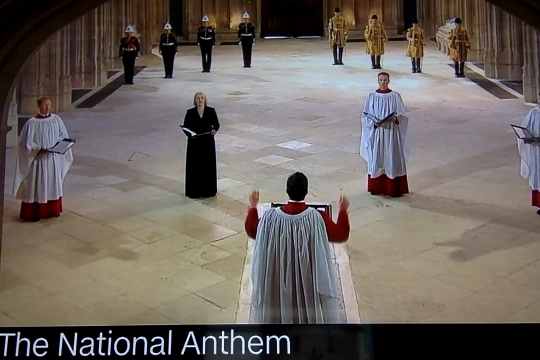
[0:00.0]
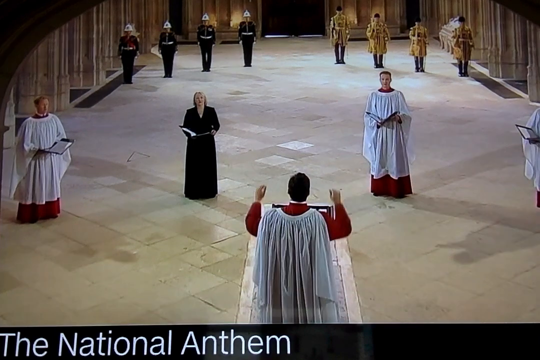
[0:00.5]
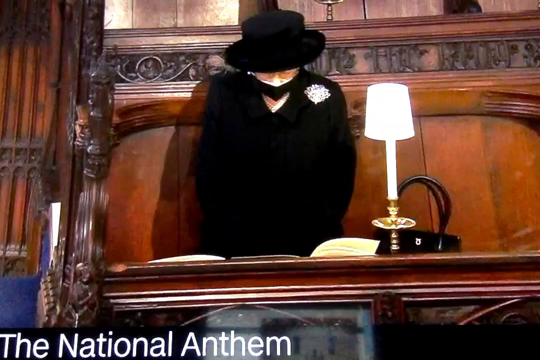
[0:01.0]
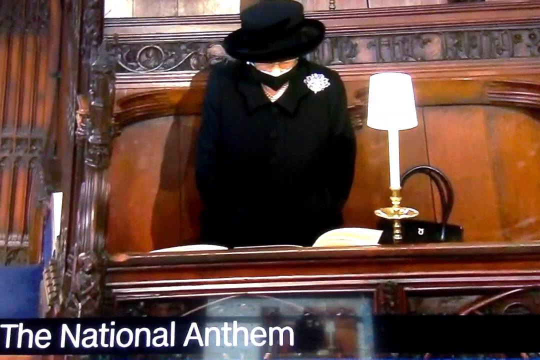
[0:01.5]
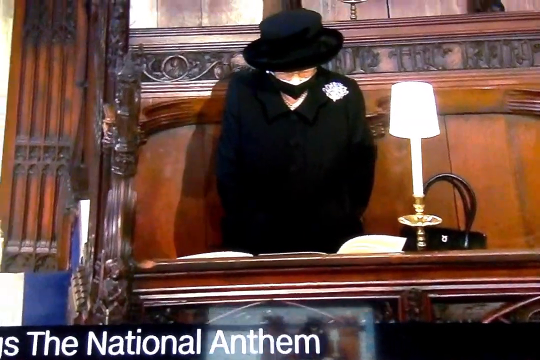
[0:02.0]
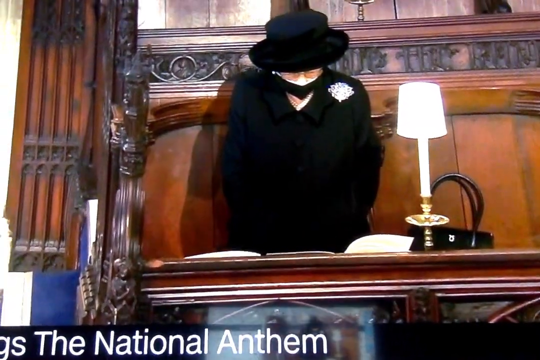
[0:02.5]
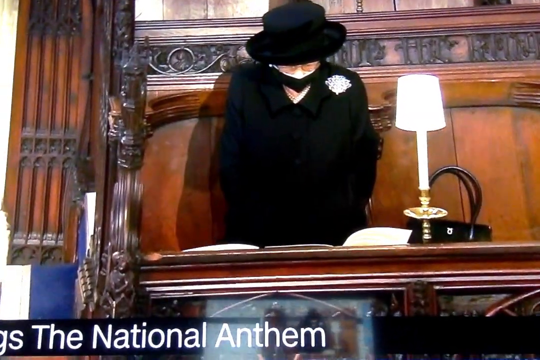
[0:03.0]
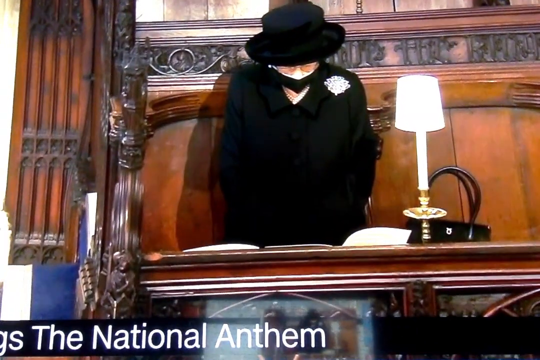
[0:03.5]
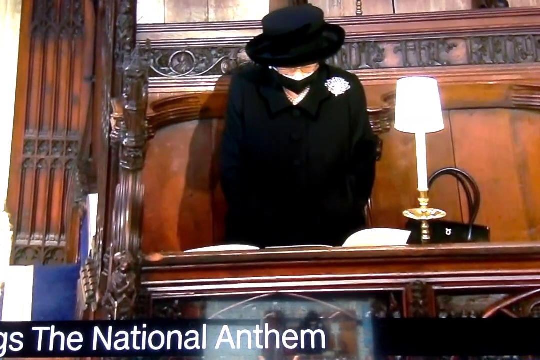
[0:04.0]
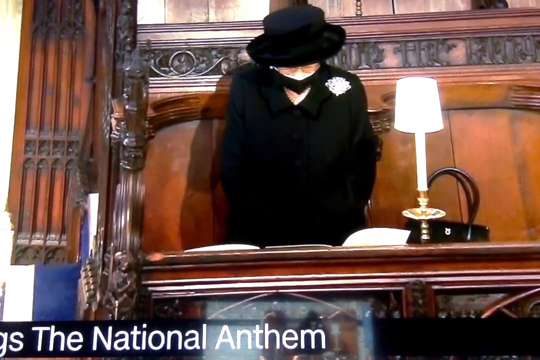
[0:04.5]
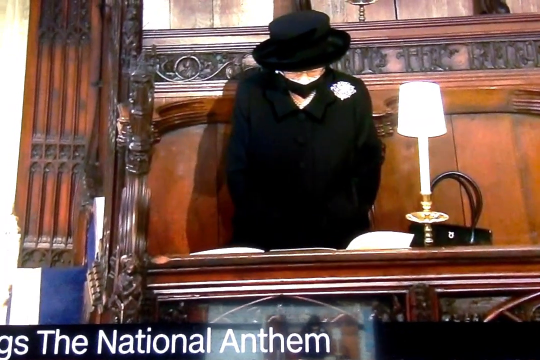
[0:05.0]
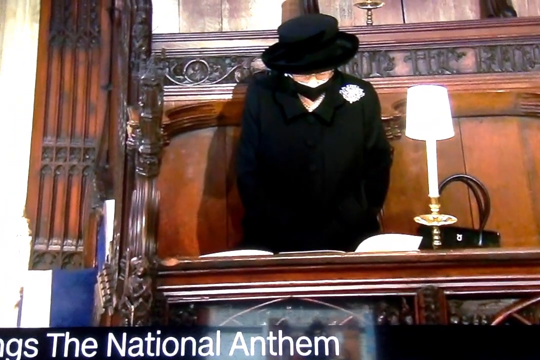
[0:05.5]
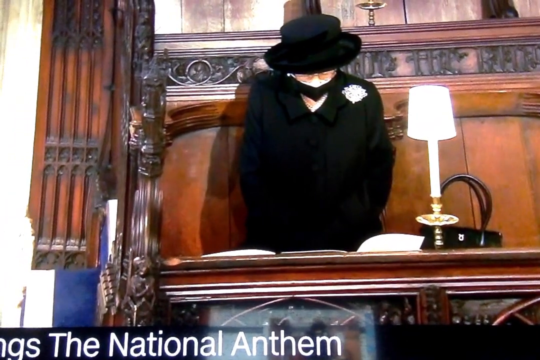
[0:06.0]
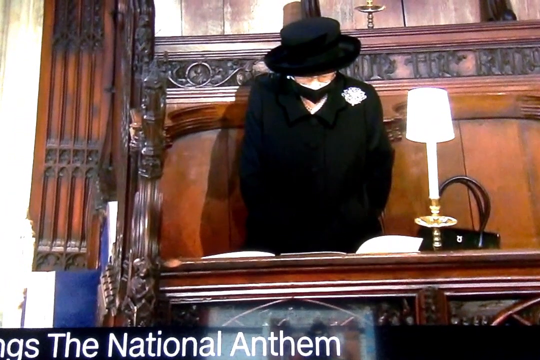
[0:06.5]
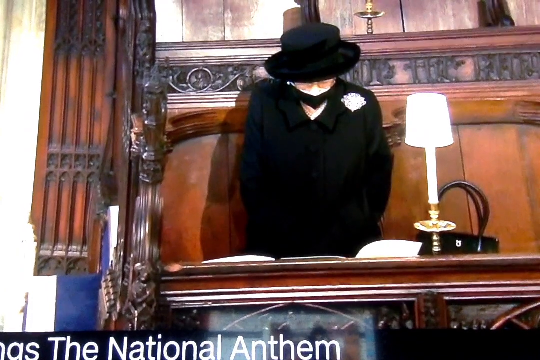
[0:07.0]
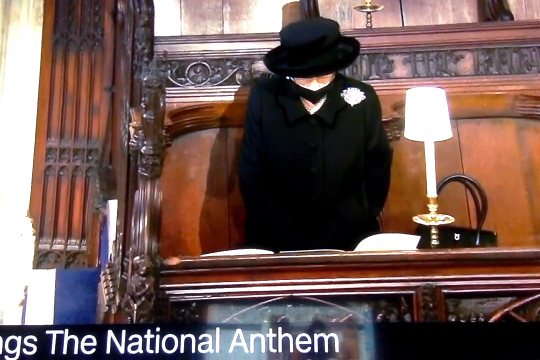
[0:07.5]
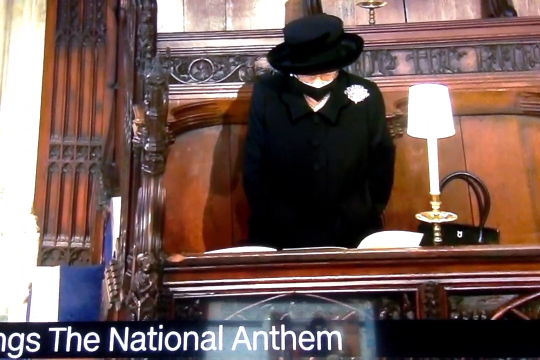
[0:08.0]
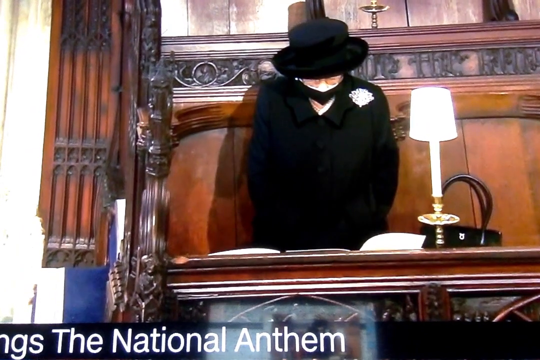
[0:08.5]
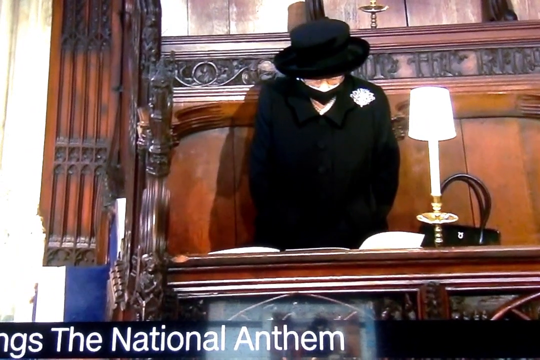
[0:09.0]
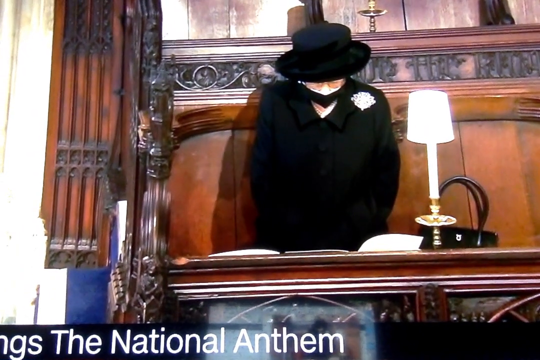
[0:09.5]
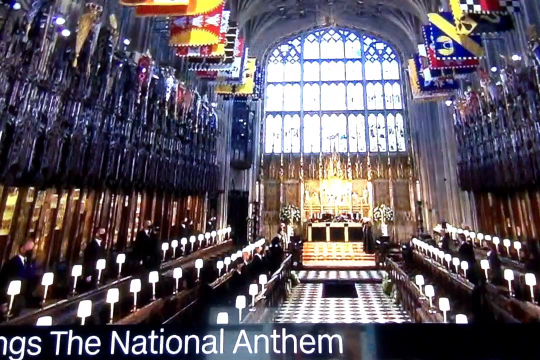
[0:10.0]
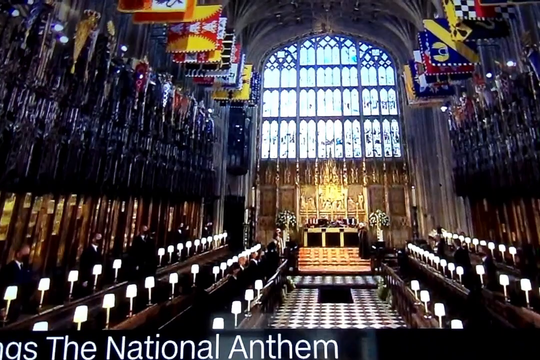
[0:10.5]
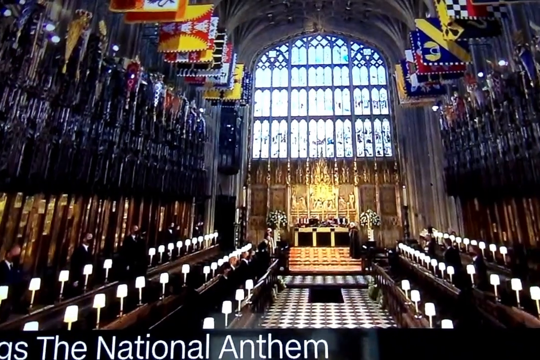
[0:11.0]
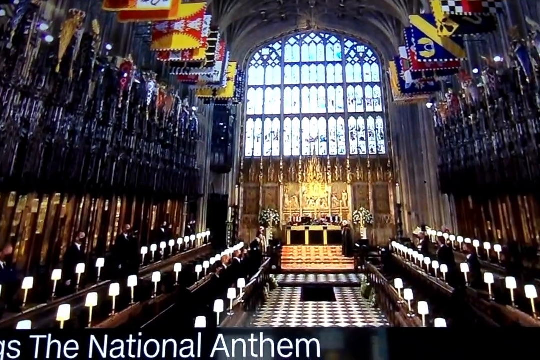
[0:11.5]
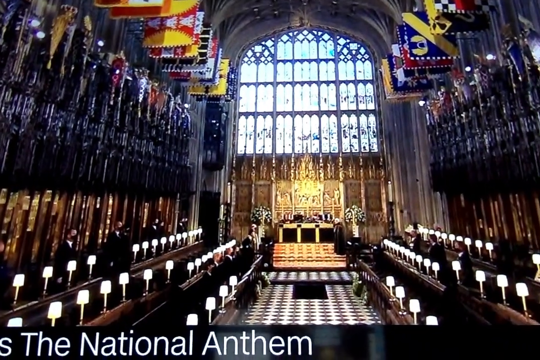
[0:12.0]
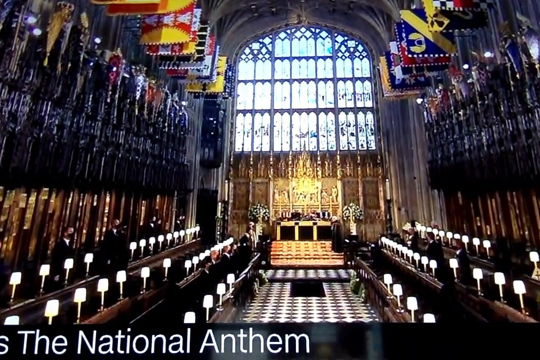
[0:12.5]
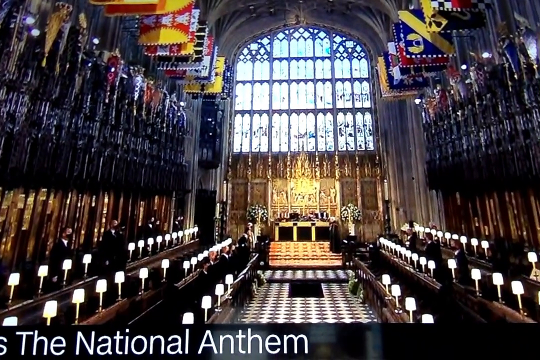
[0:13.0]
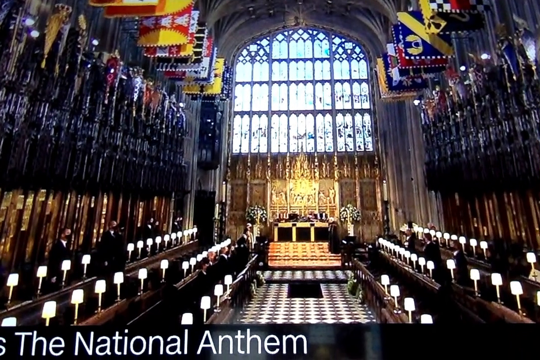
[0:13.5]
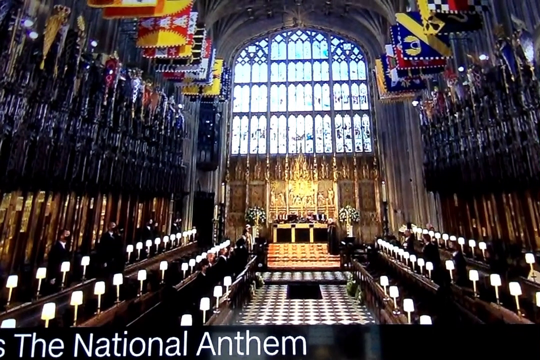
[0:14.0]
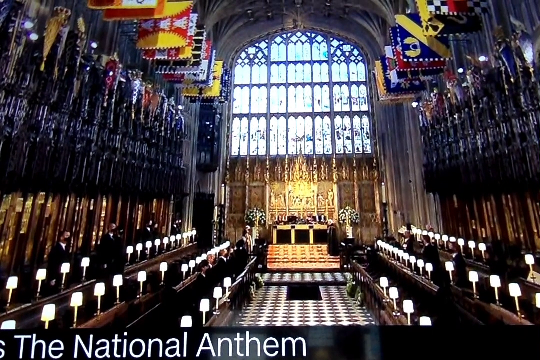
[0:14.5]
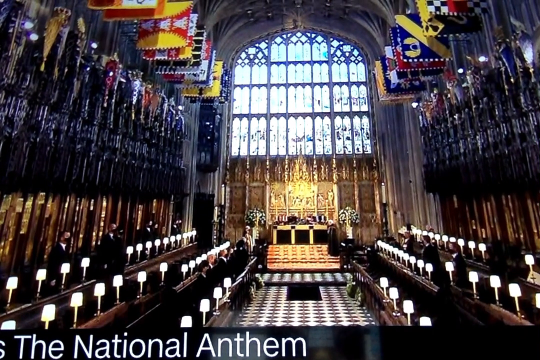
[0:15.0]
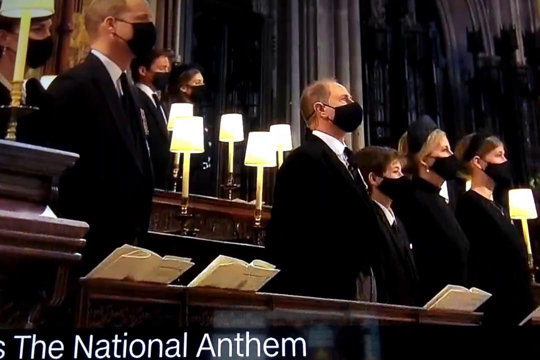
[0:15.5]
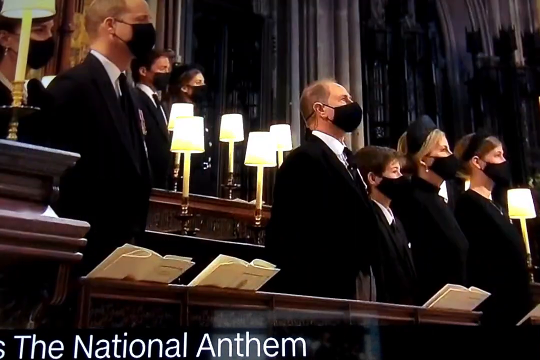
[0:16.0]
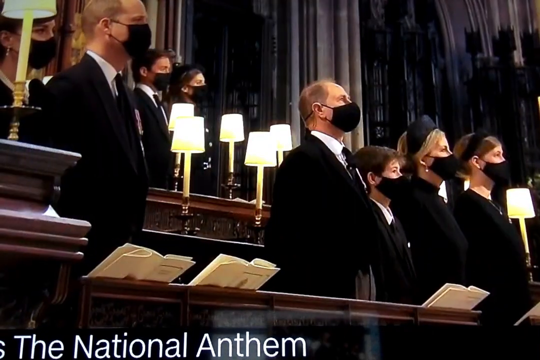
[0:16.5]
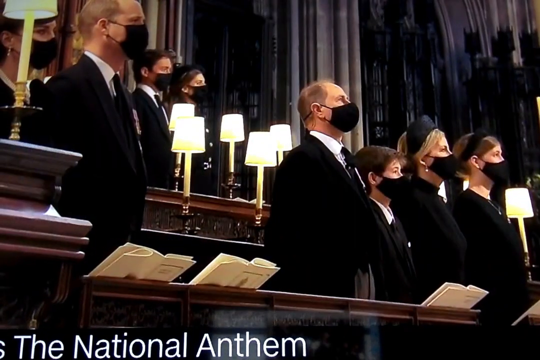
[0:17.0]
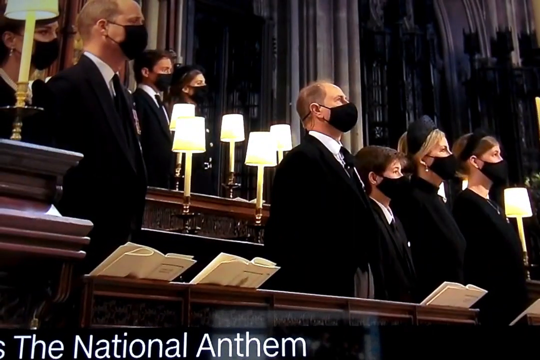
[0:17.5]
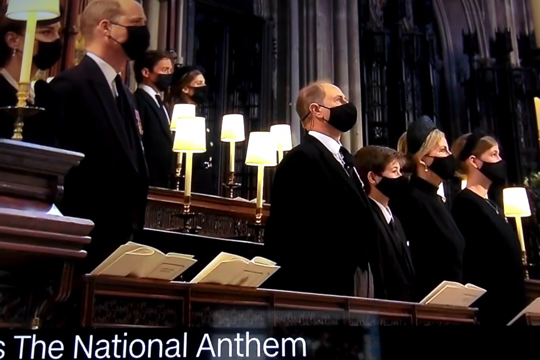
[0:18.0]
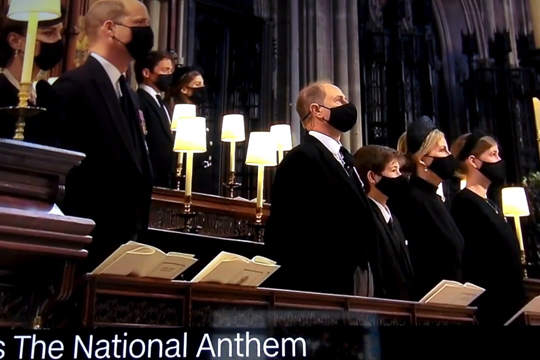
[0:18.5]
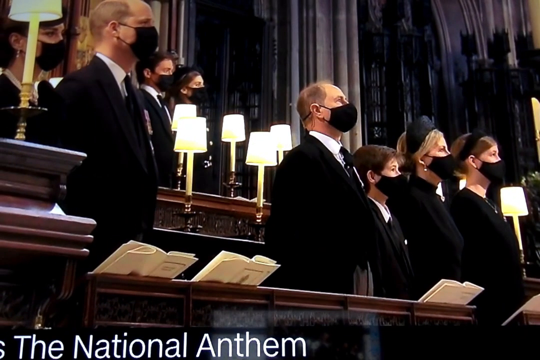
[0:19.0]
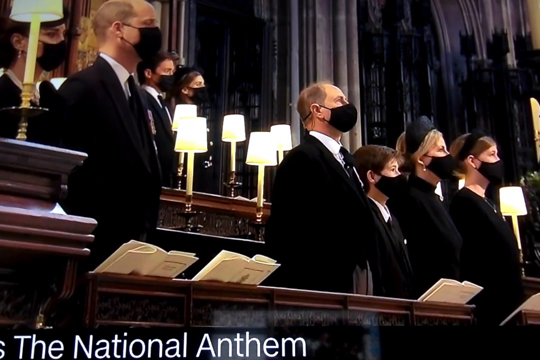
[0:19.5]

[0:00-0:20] People wear what appear to be robes, looking like priests in white robes with another layer of red underneath. A person in the forefront has his back turned to the camera, and three people dressed exactly like him face him; there is also one person wearing black. They all hold what looks like some kind of pamphlets or books. The man in the forefront waves his hands up and down, somewhat like a person conducting an orchestra. The video cuts to a woman dressed in black with a black hat and a black mask over her face, standing in front of a brown desk, with a brown wooden bench behind her. She is looking down and seems to be reading something placed on the desk in front of her. It then cuts to a wide shot of the inside of a building that looks like a church, with flags everywhere.